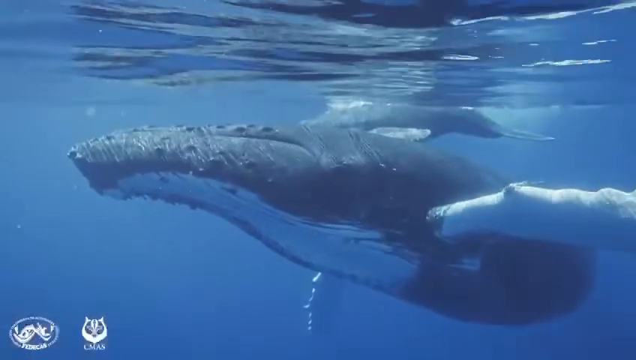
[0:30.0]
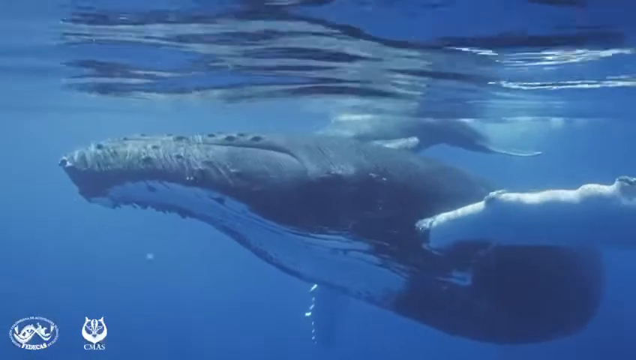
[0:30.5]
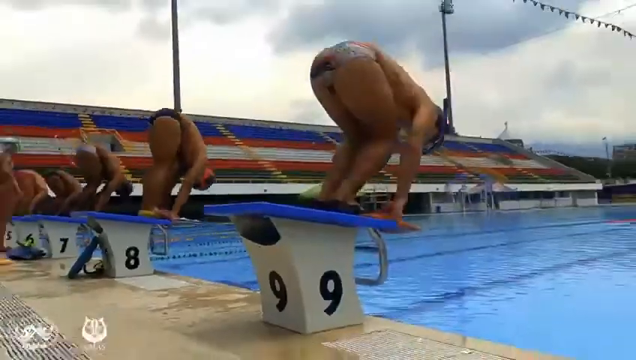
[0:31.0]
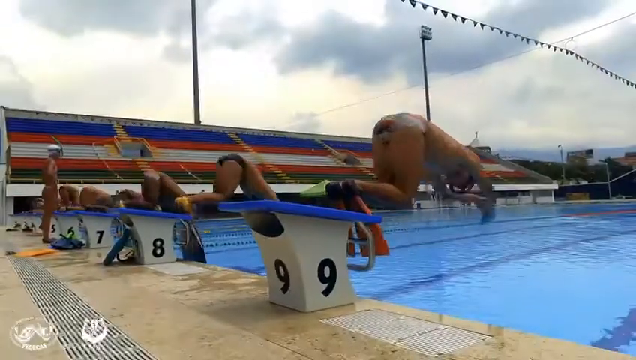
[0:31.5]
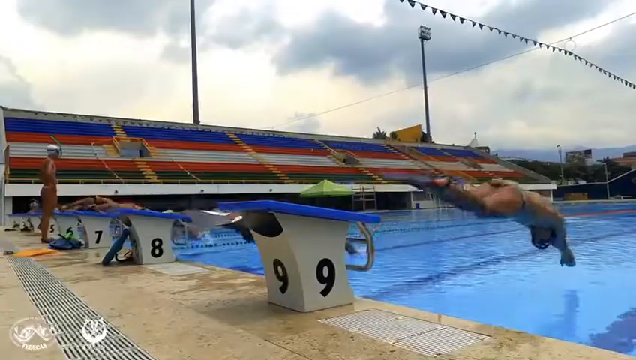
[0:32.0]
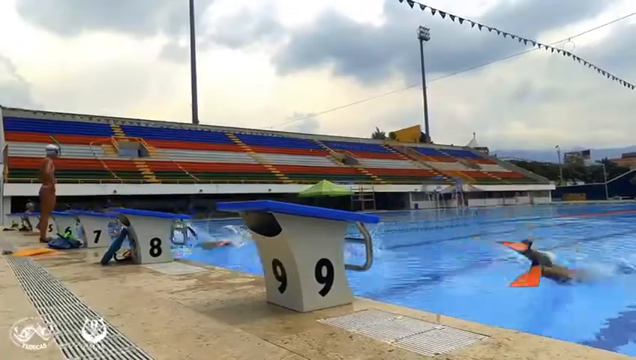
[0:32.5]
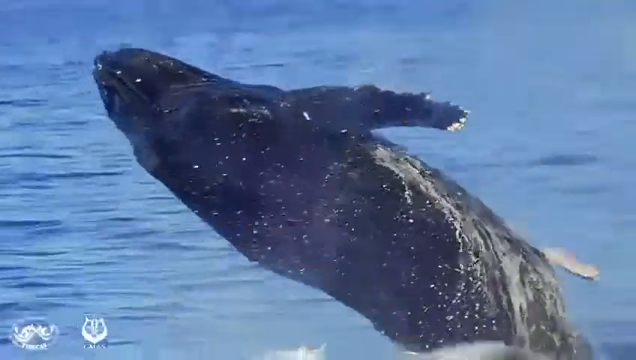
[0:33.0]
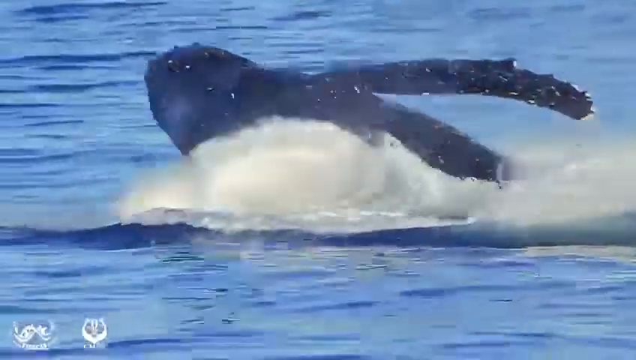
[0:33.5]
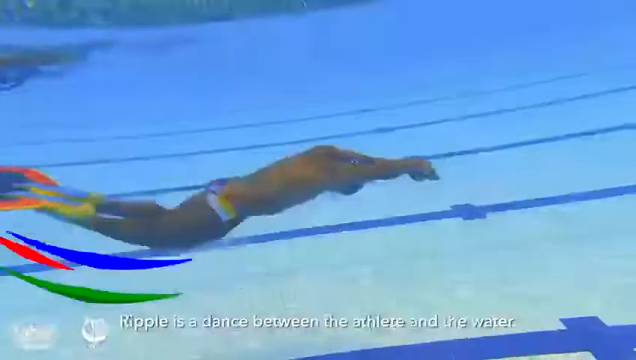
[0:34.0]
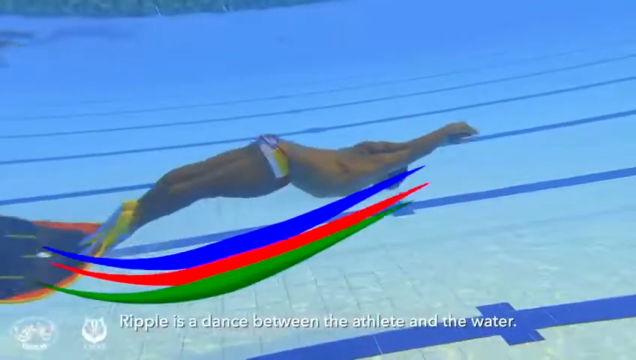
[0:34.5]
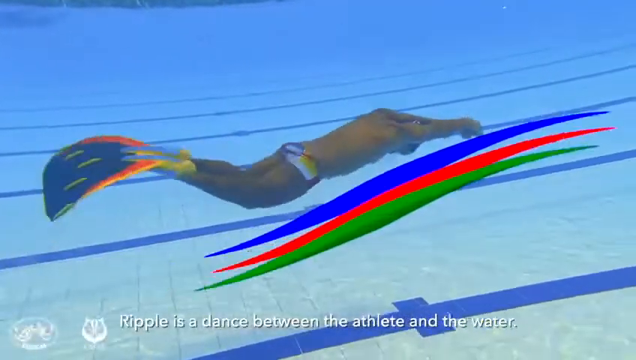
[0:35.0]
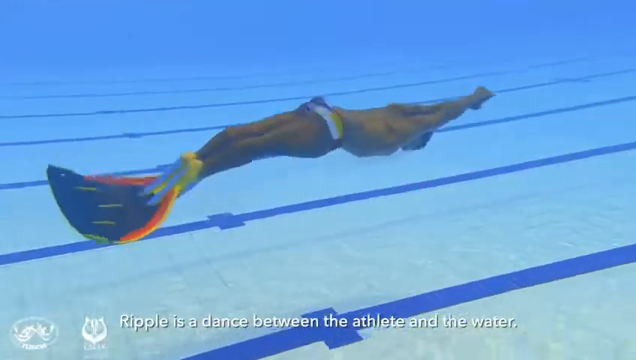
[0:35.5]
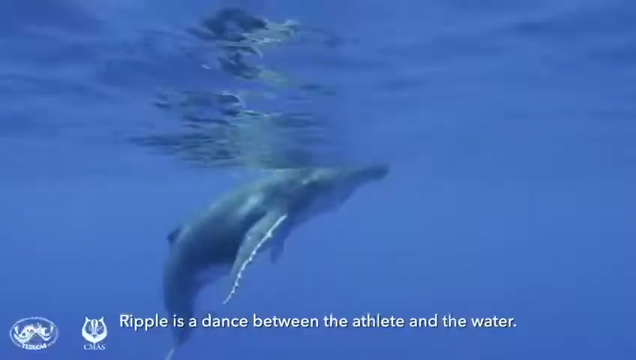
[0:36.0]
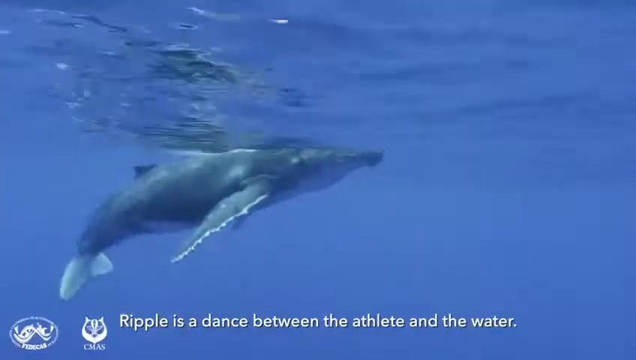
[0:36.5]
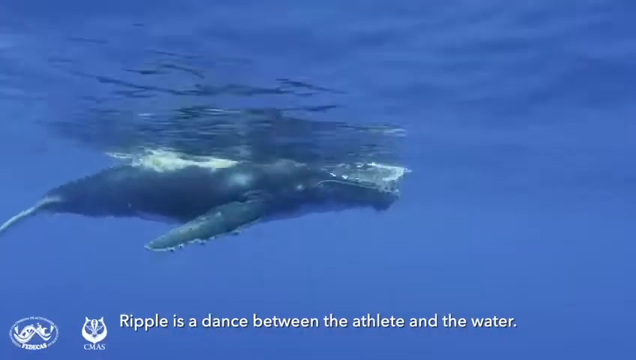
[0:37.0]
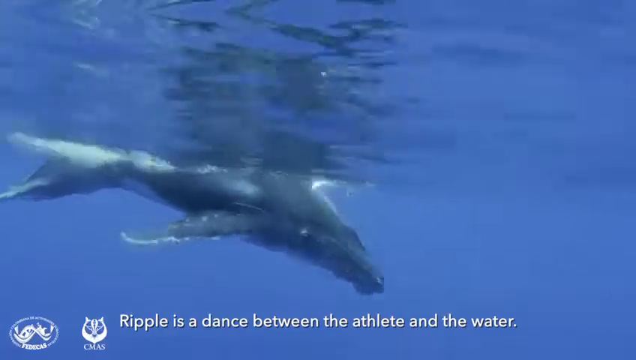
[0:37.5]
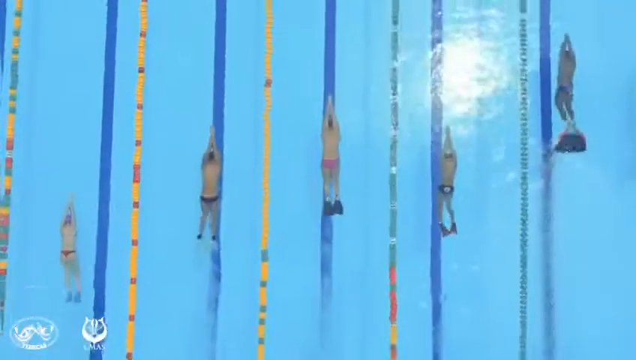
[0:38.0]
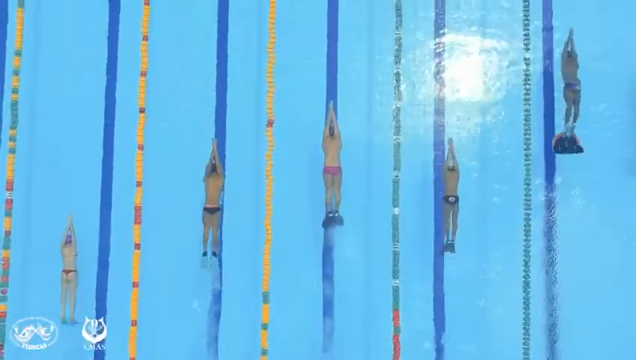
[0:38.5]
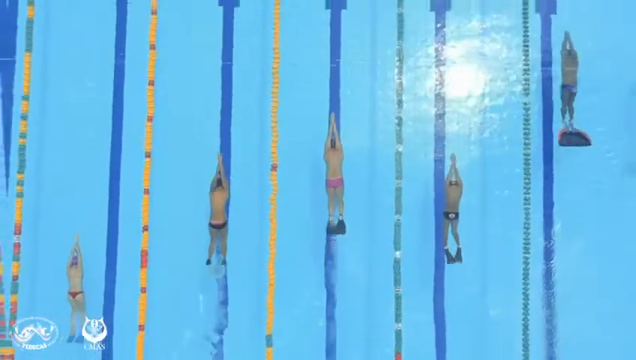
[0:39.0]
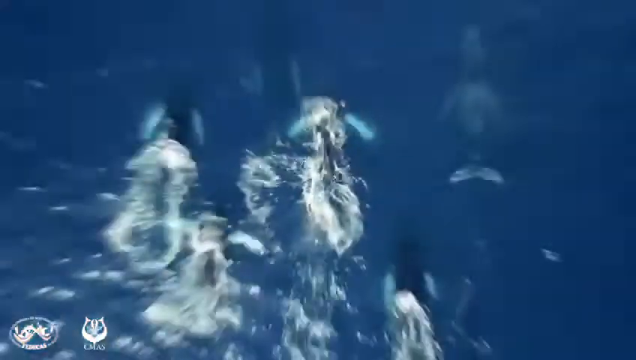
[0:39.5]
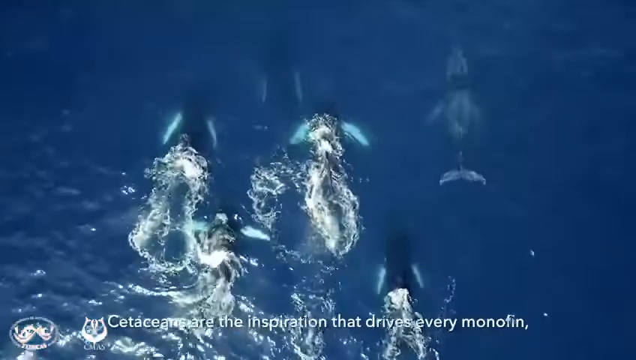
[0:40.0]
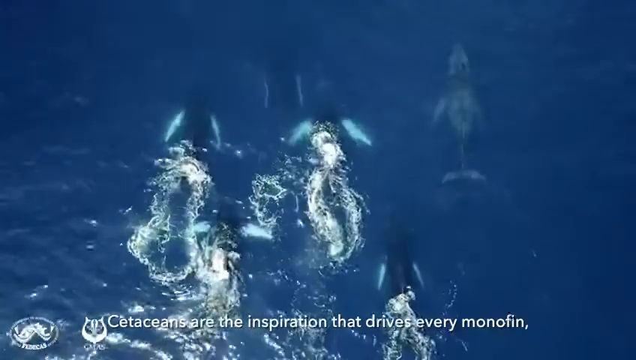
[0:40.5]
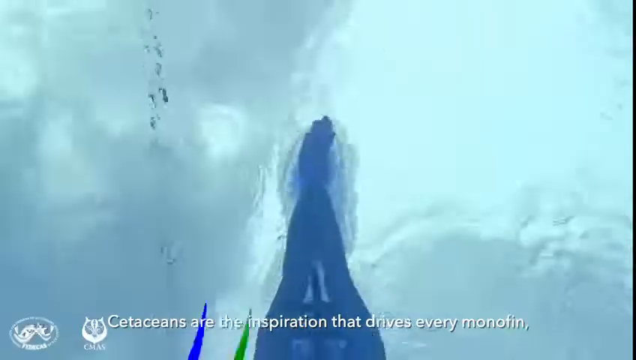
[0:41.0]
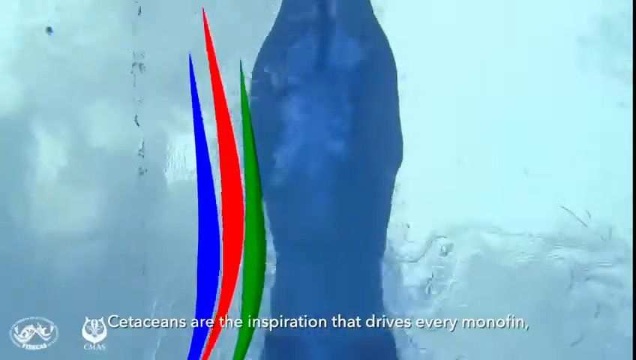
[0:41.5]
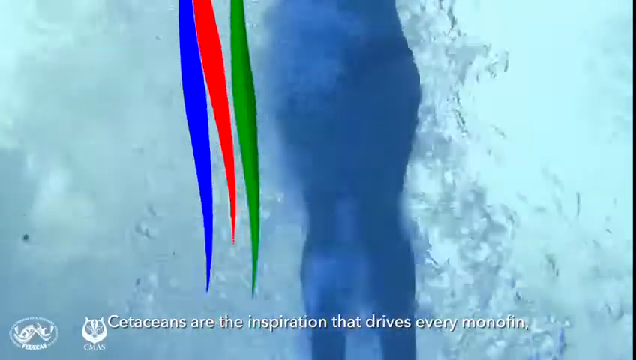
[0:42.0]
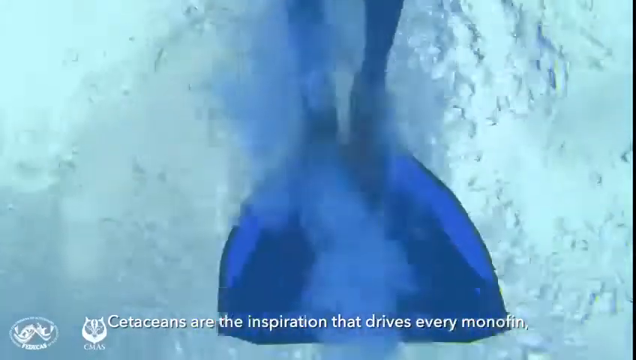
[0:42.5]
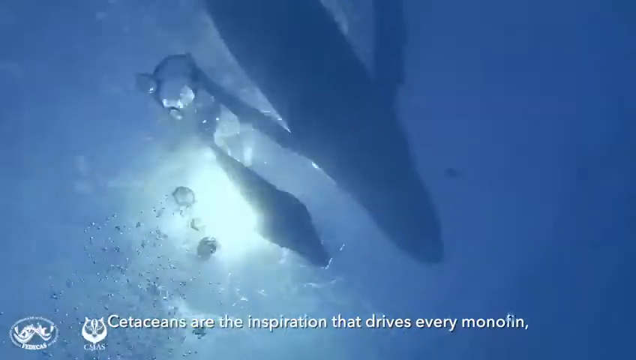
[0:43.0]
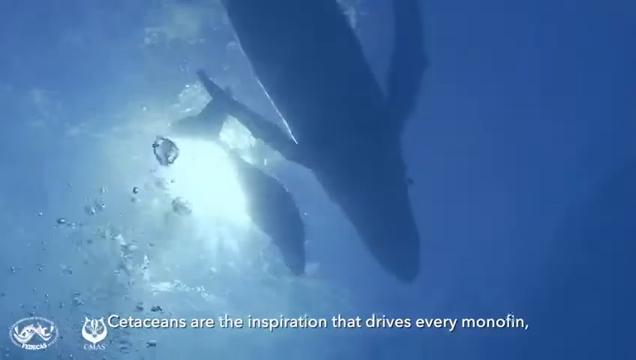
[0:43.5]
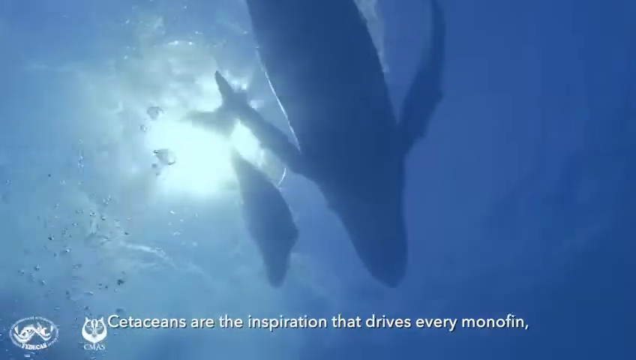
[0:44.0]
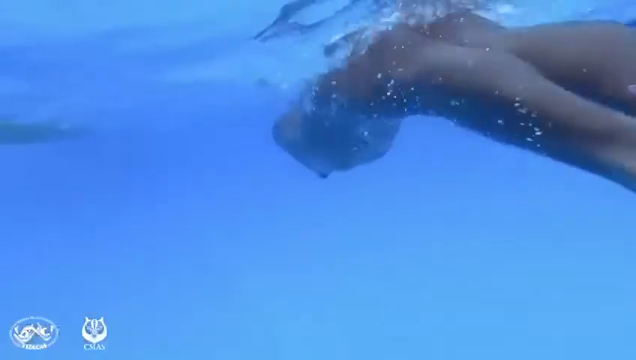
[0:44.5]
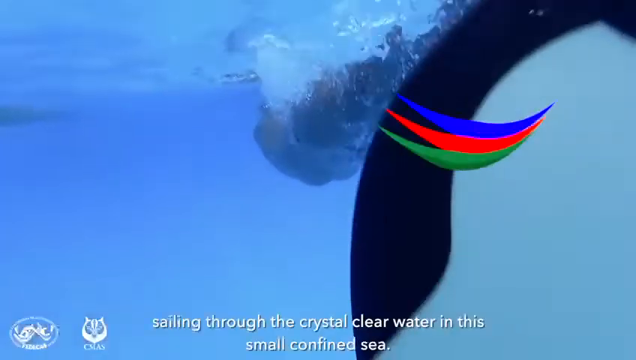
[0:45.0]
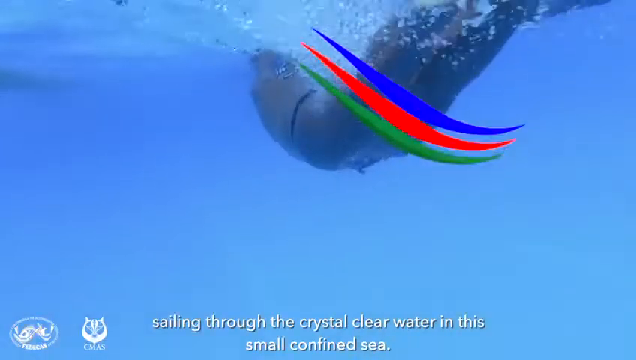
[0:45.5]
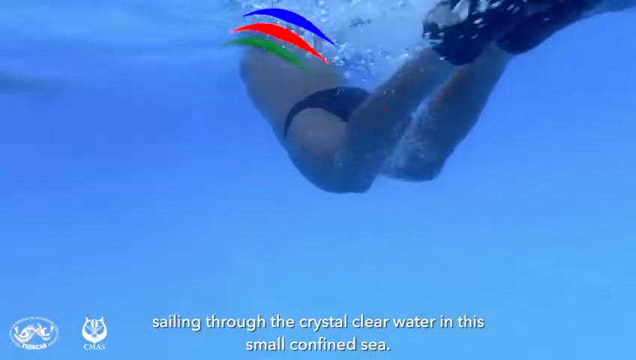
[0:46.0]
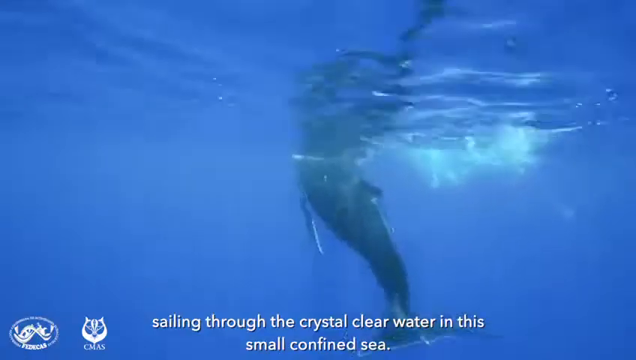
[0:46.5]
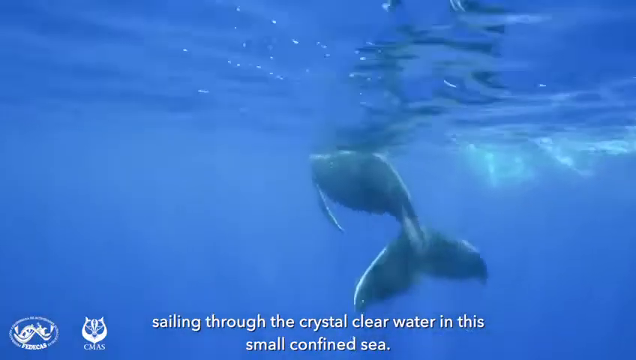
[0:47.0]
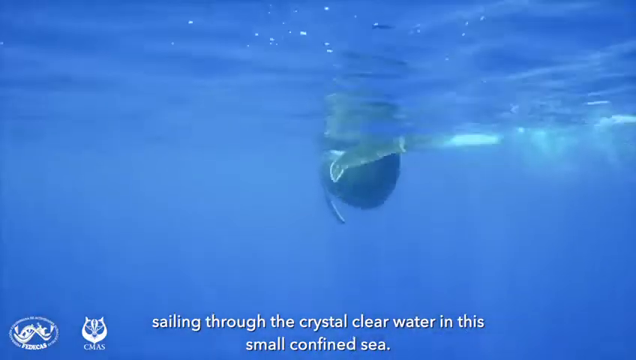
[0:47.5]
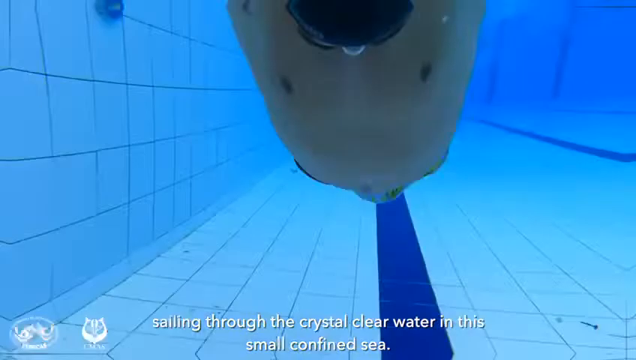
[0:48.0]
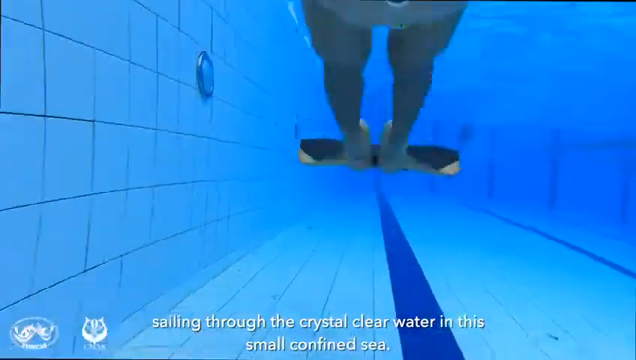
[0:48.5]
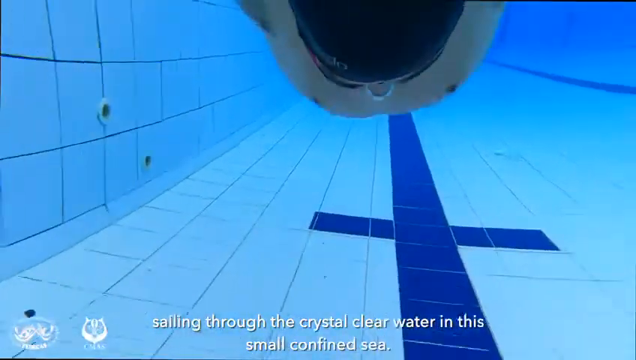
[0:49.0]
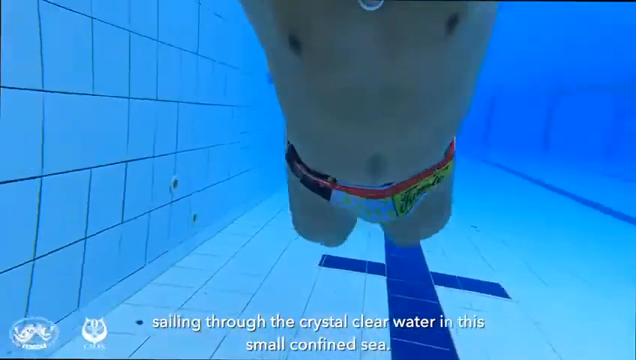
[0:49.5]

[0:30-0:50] The swimmers jump into the water, and the video keeps showing the swimmers alternating with whales in the ocean, apparently comparing the swimmers' fluid movement in the water to that of the whales. Text during the swimming reads "a ripple is a dance between the athlete and the water" and "cetaceans are the inspiration that drives every monofin," followed by "sailing through the crystal water in this small confined sea." The video seems almost like an advertisement rather than a sports video.